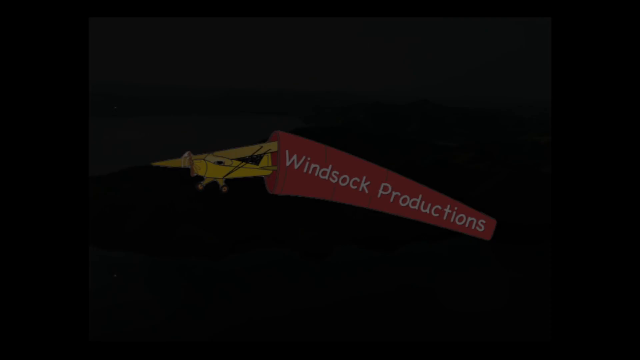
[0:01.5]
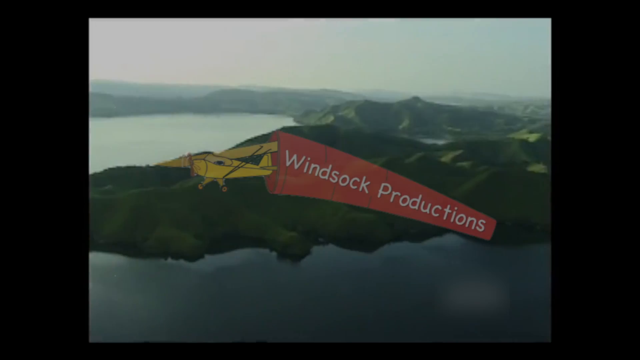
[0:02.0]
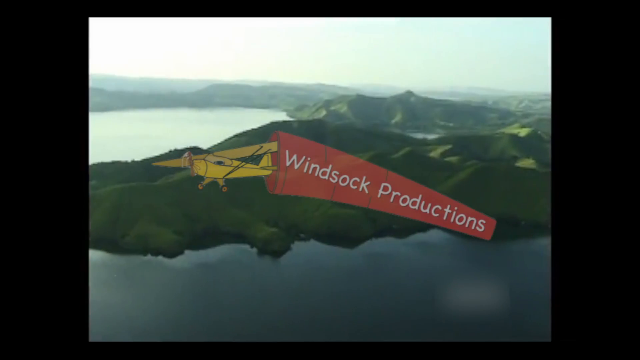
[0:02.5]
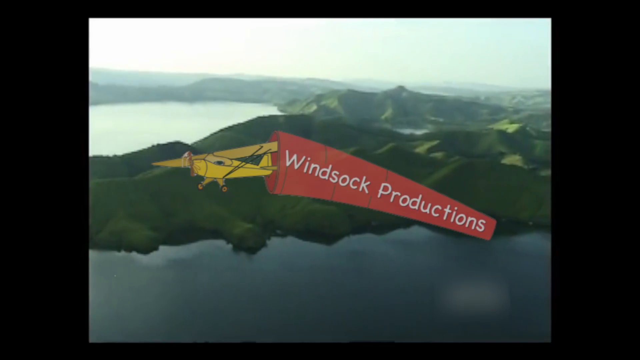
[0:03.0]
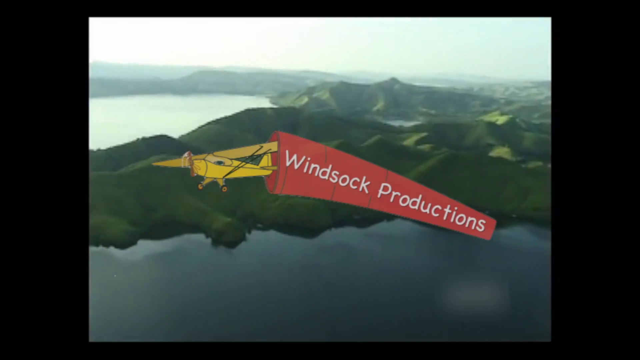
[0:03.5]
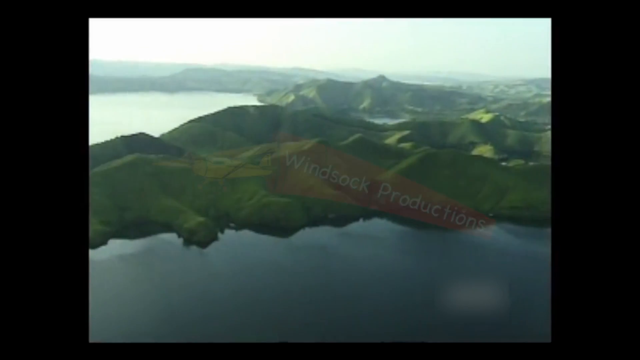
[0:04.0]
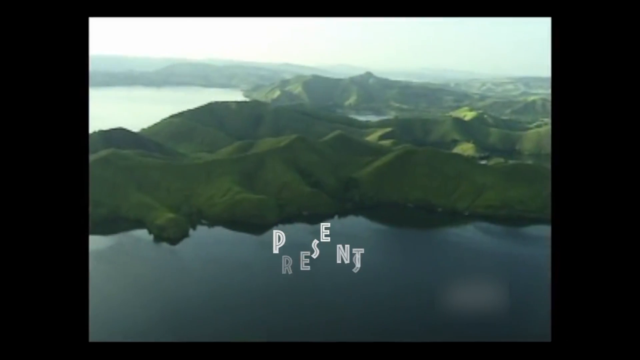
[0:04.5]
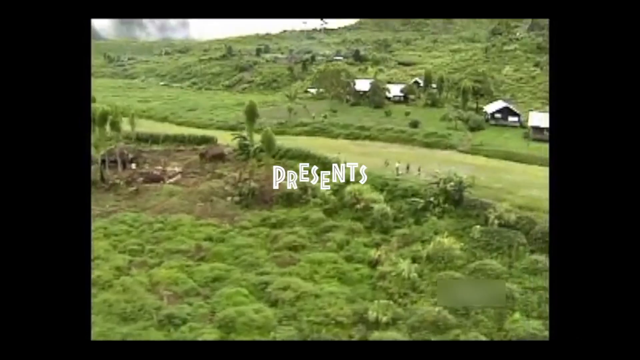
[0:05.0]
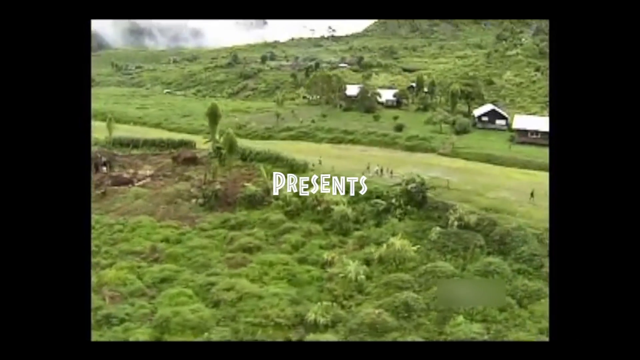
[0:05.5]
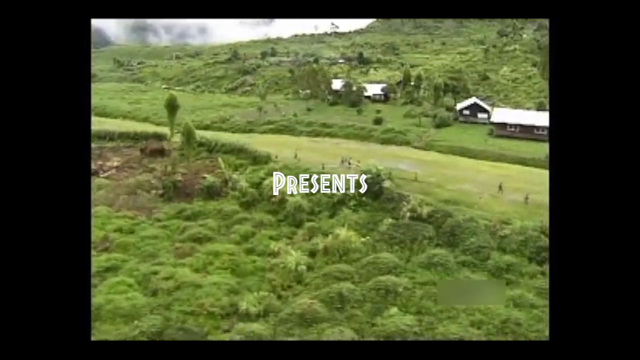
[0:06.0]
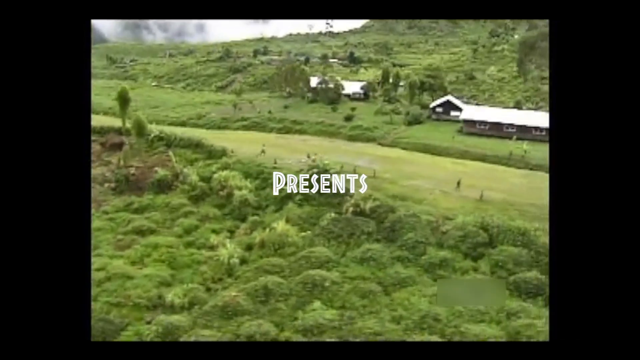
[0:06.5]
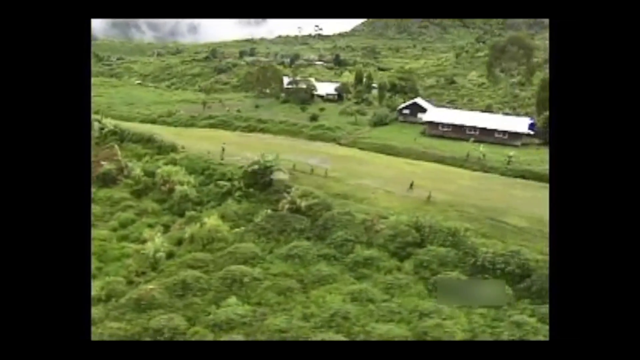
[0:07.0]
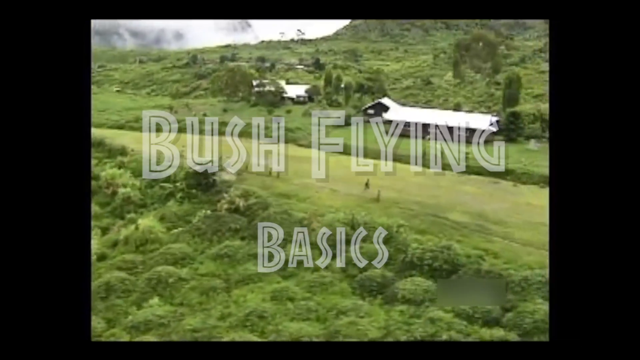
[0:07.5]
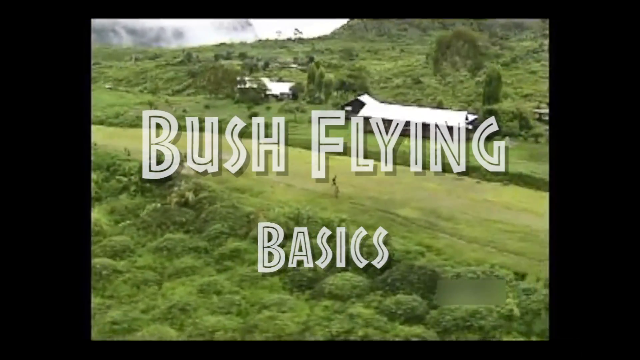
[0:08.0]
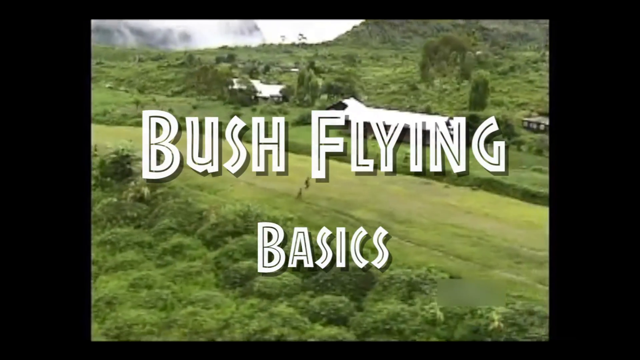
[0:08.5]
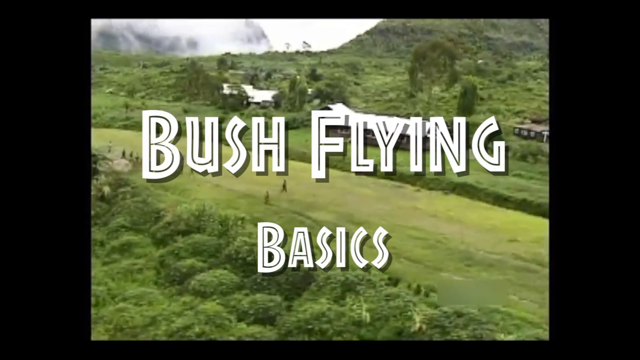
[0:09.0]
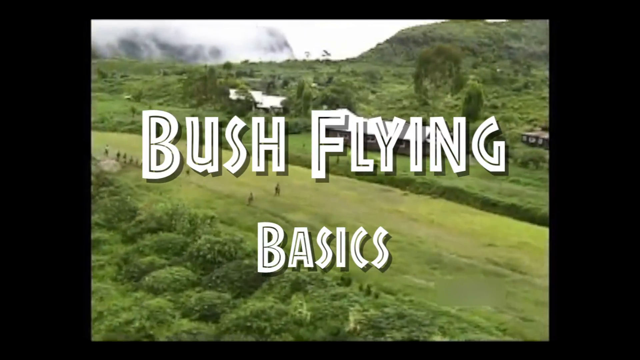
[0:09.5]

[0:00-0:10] The video opens with a small graphic of a yellow plane with a windsock behind it and the text "Windsock Productions." The view then looks down from a great height on very lush rolling fields and mountains, possibly in Australia or somewhere greener like New Zealand; everything looks lush and green. Next, some cabins appear with the text "presents" and then "Bush flying basics."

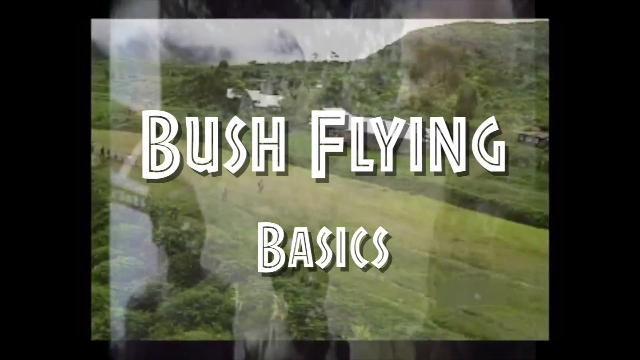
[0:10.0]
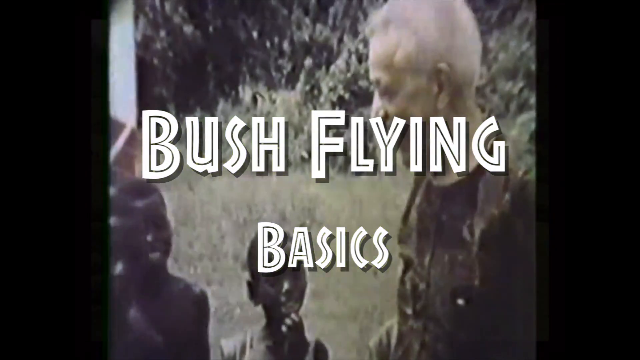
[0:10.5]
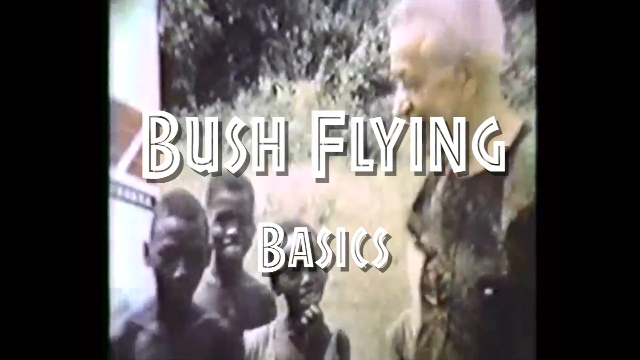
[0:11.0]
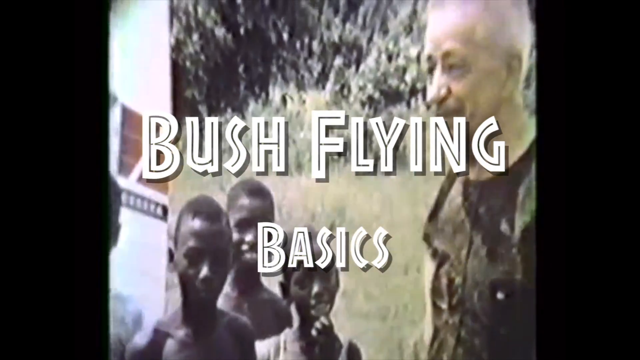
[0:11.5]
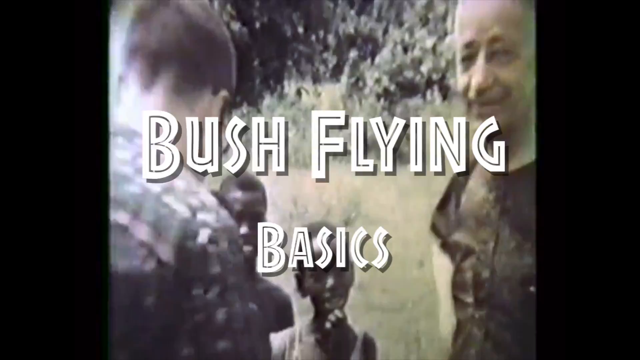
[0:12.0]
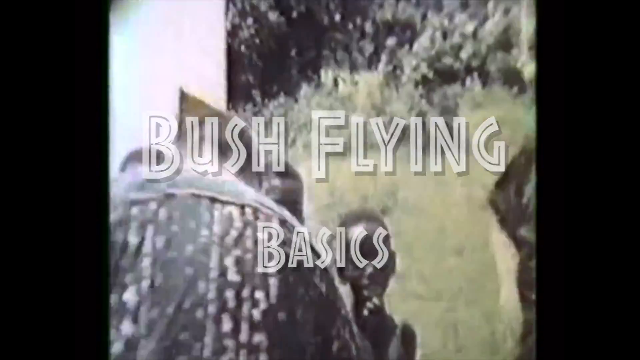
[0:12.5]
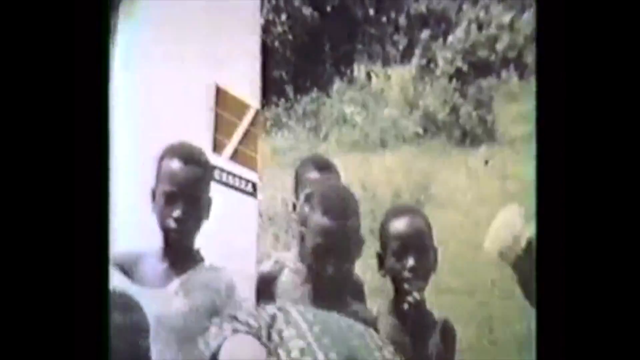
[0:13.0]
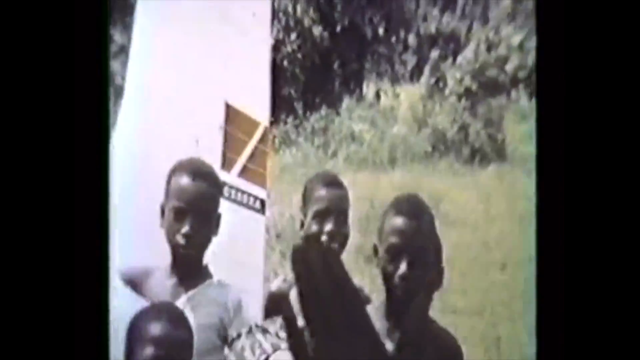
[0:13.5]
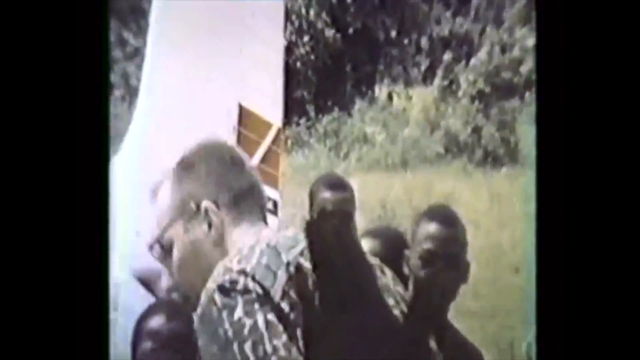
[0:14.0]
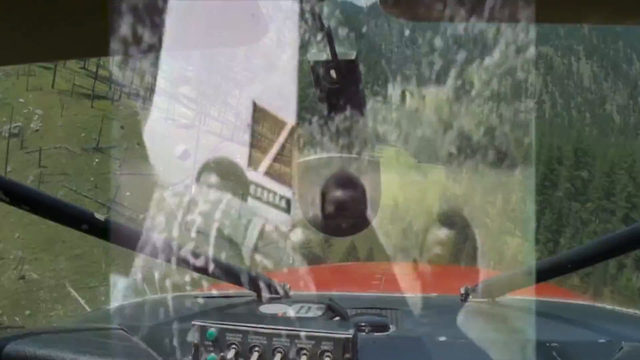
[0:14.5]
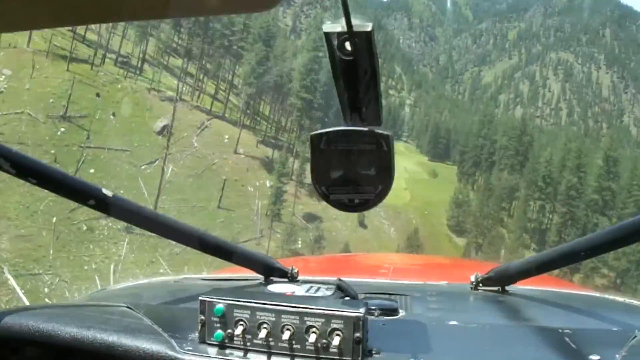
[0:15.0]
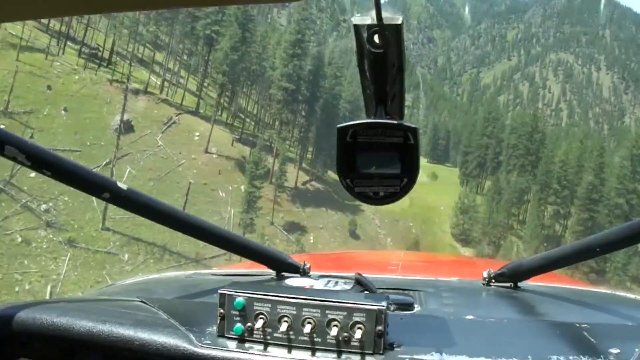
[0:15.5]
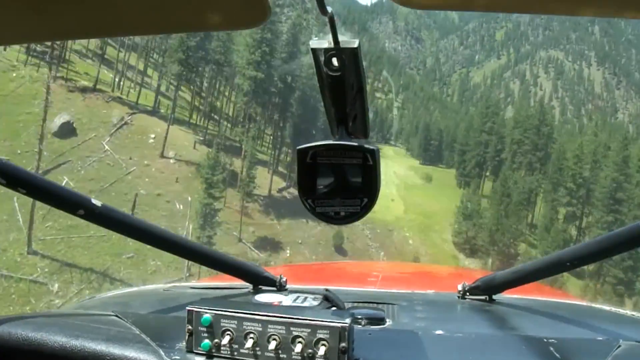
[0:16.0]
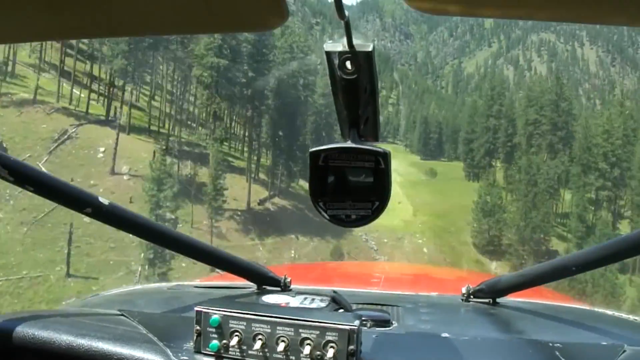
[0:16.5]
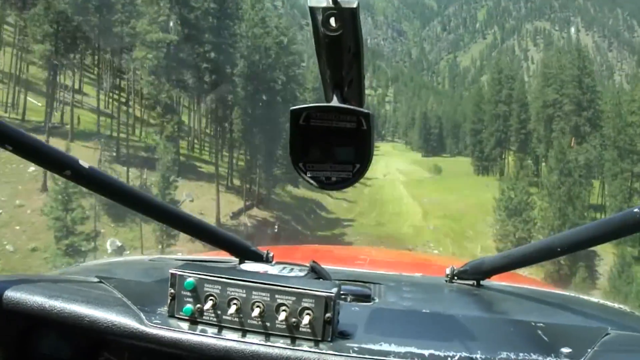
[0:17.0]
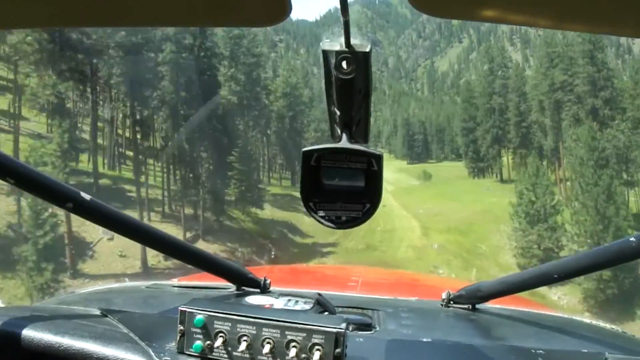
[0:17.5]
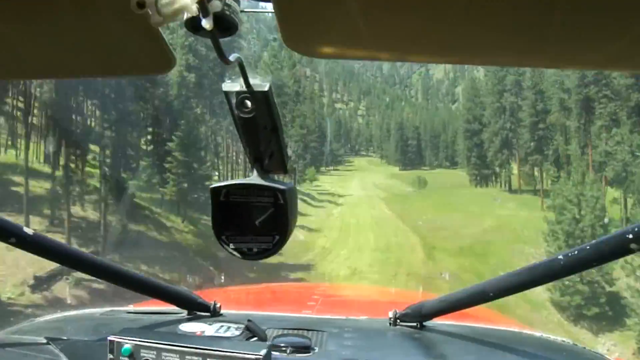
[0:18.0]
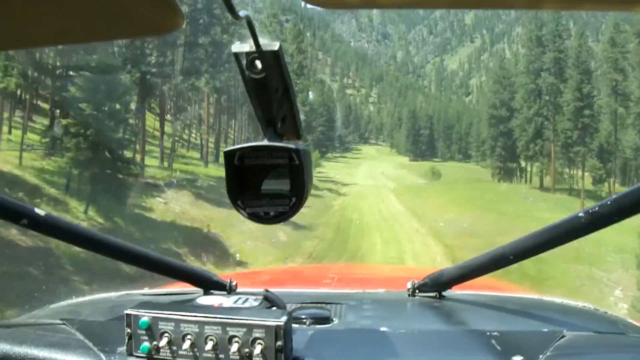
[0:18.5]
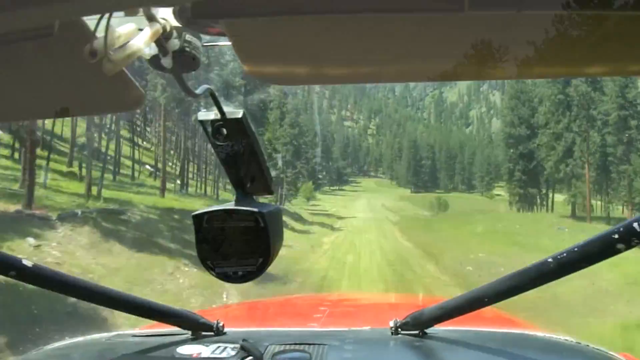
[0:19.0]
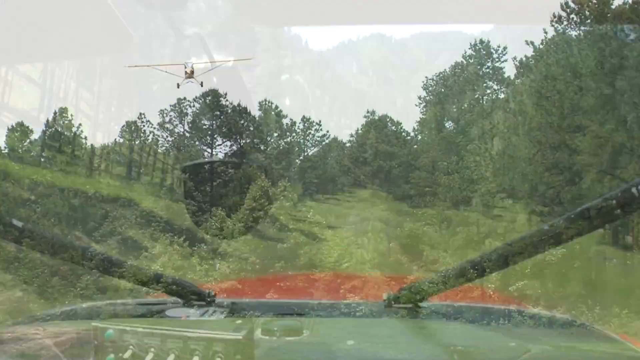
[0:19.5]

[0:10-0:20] The scene changes to an older man who looks possibly Asian, with three dark children below him who might be somewhere in Africa. The footage looks really old. The view then looks down from the cockpit of a small plane, followed by an outside view of the very small plane starting to land. The landing area does not look like a landing strip; it looks like a grass field that someone has recently mowed.